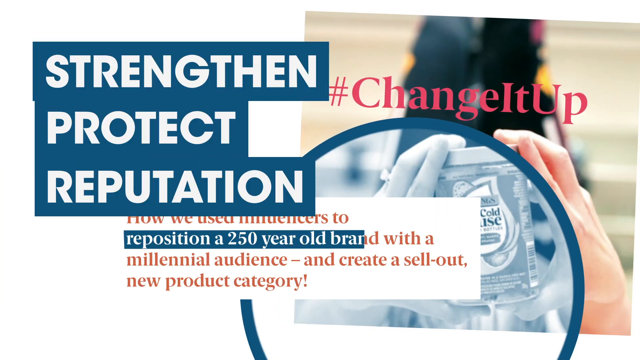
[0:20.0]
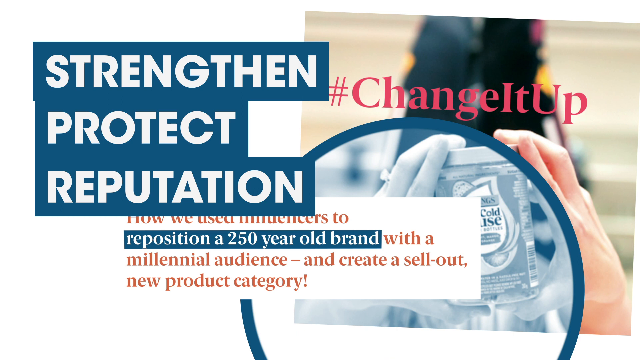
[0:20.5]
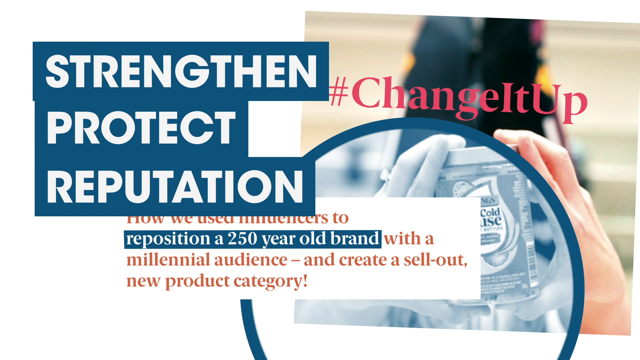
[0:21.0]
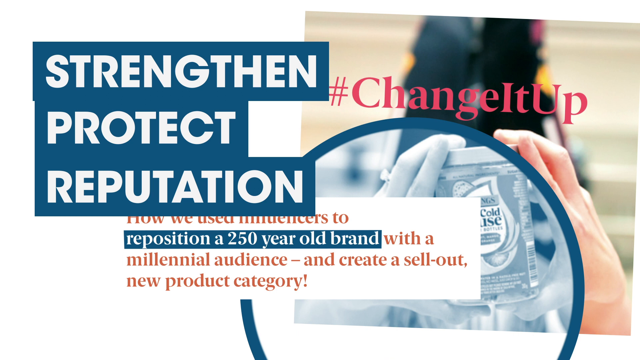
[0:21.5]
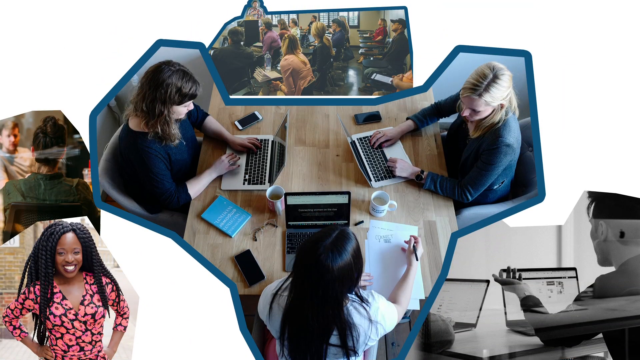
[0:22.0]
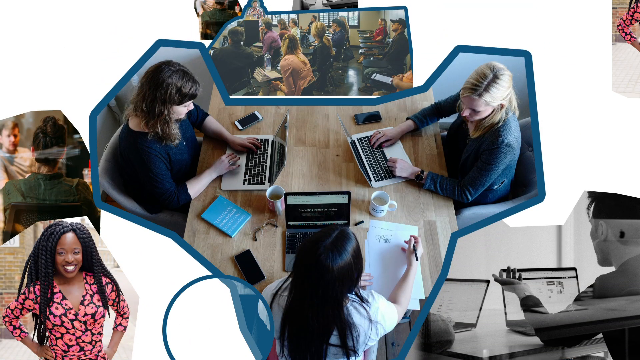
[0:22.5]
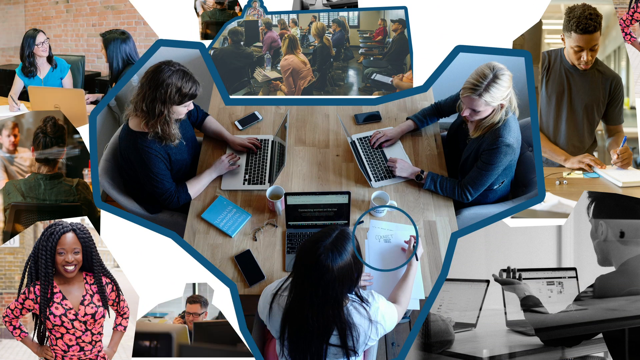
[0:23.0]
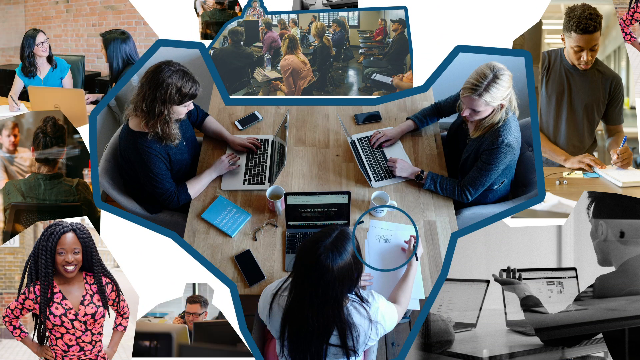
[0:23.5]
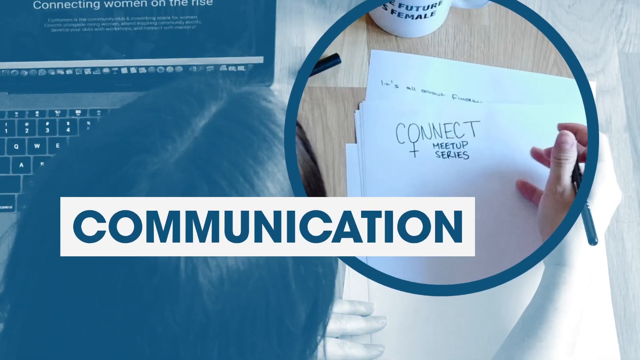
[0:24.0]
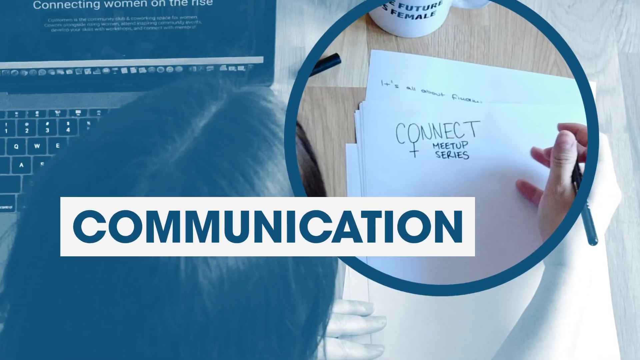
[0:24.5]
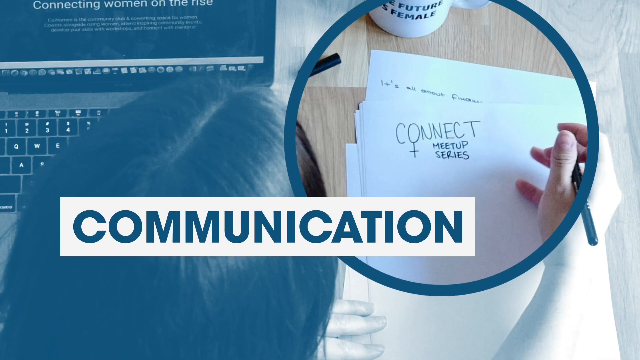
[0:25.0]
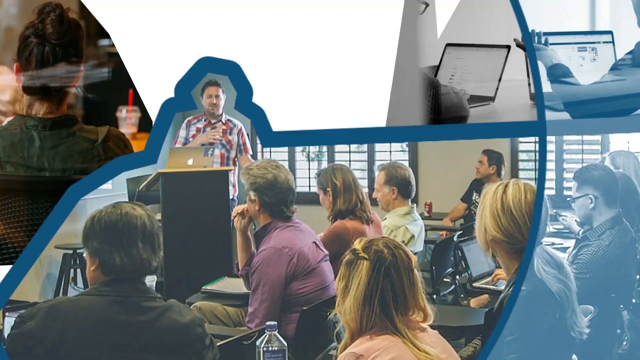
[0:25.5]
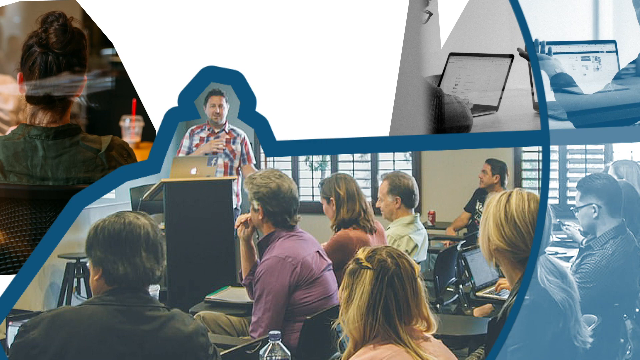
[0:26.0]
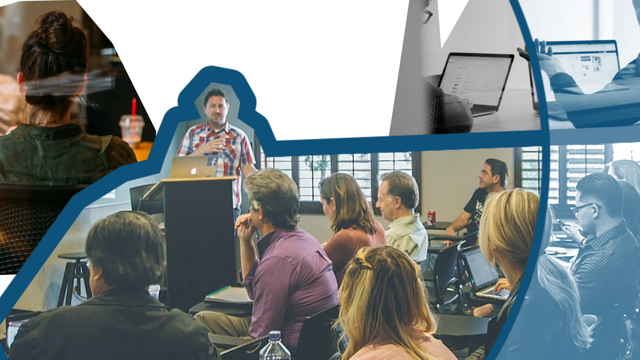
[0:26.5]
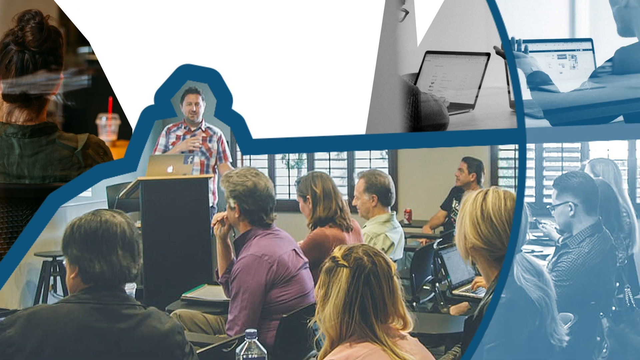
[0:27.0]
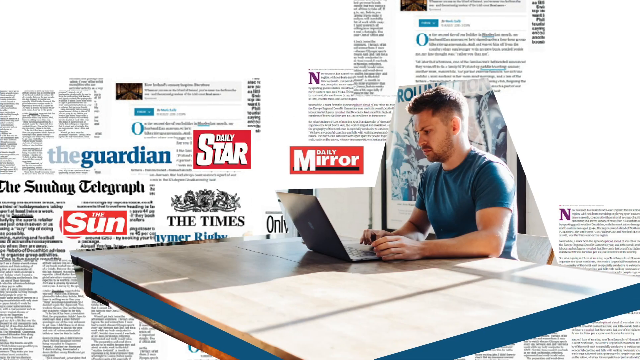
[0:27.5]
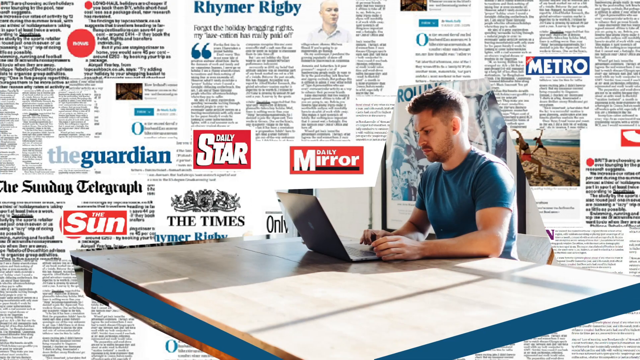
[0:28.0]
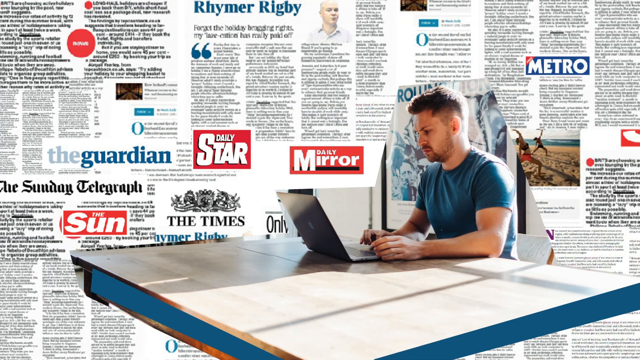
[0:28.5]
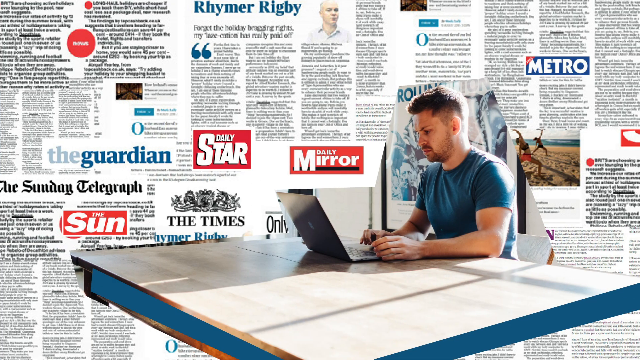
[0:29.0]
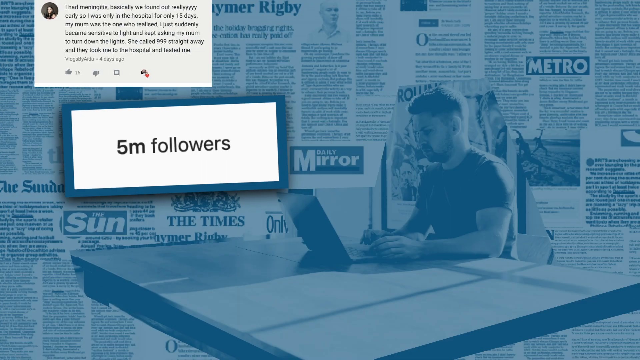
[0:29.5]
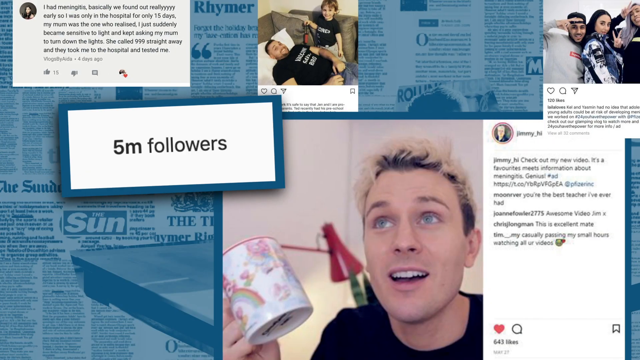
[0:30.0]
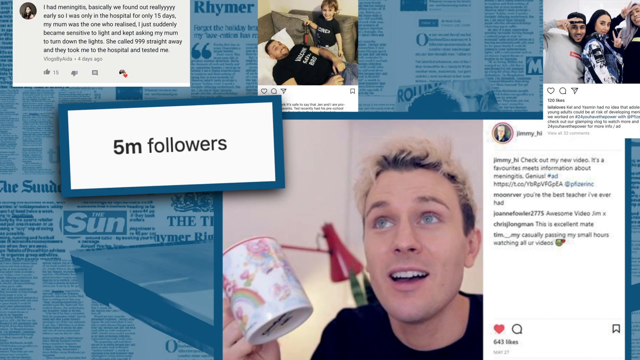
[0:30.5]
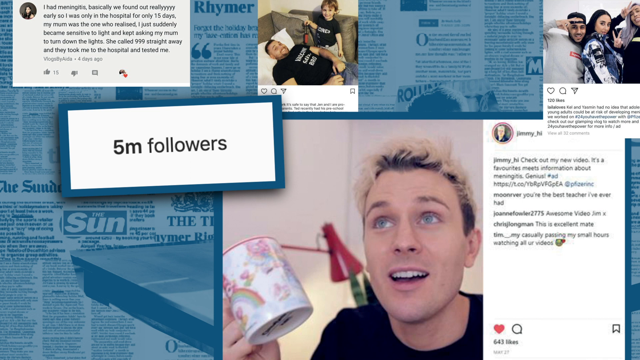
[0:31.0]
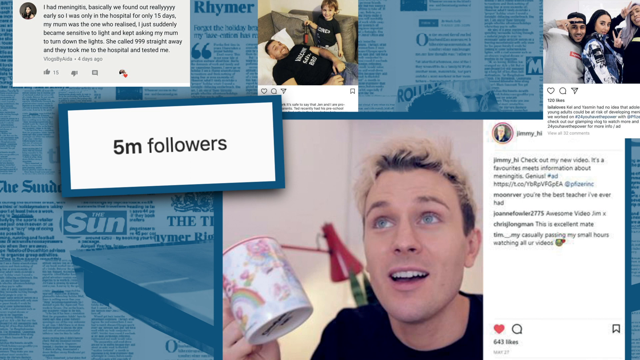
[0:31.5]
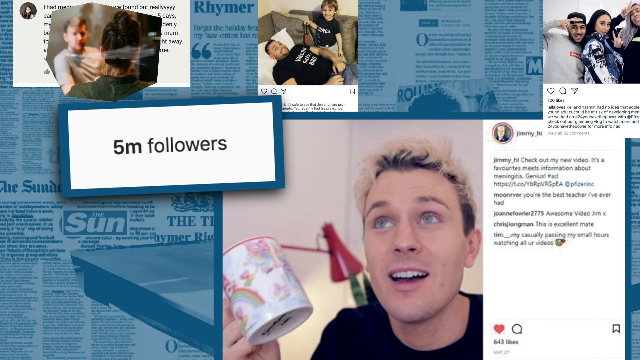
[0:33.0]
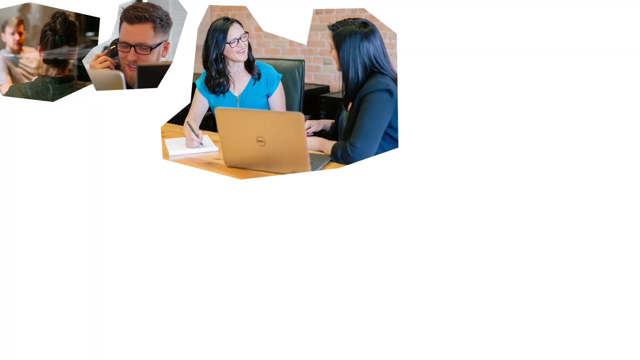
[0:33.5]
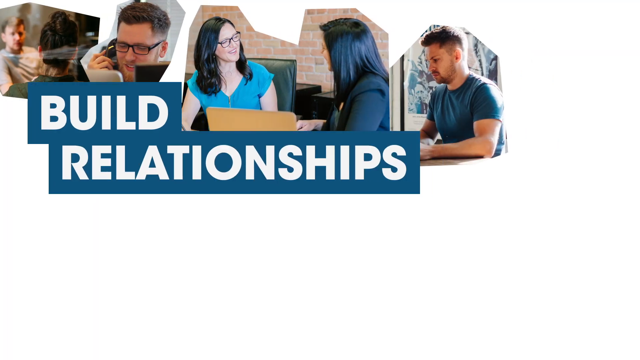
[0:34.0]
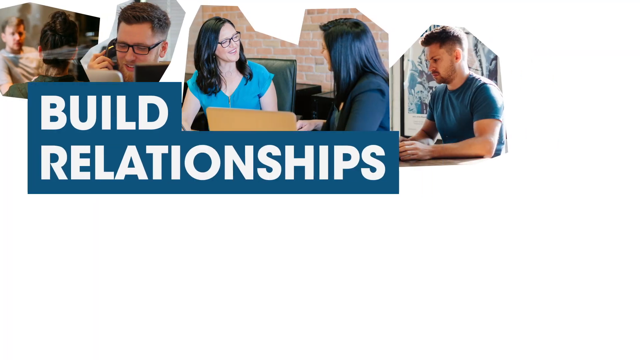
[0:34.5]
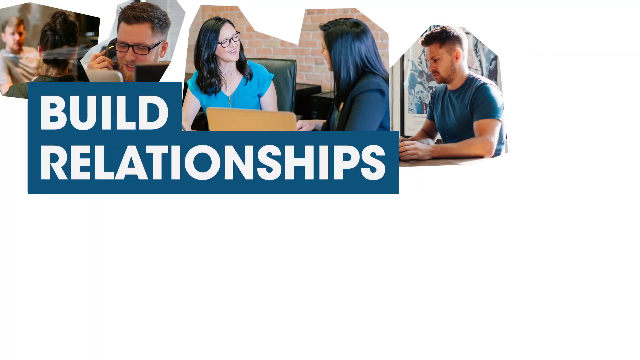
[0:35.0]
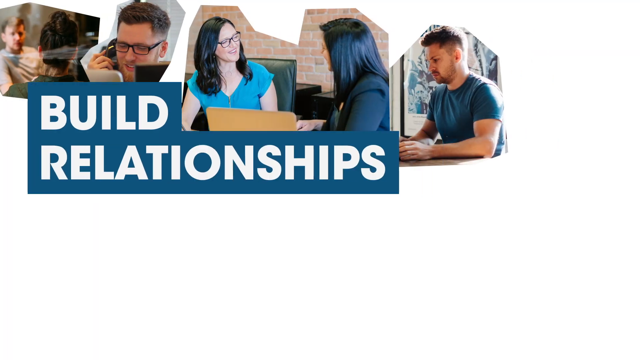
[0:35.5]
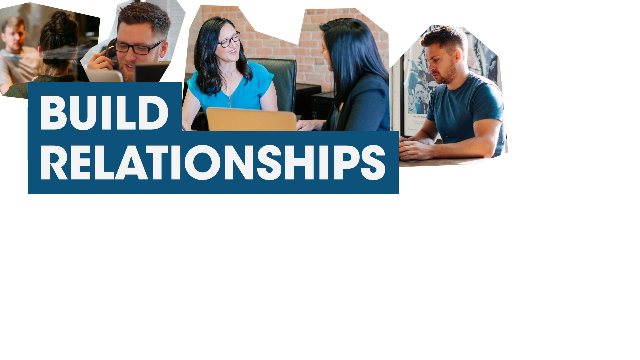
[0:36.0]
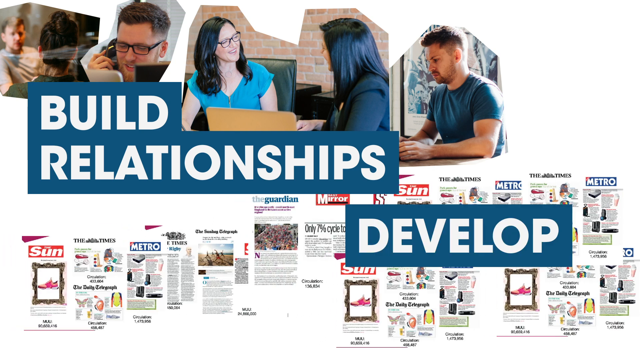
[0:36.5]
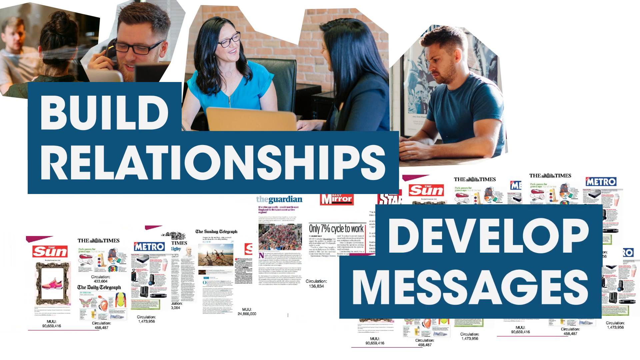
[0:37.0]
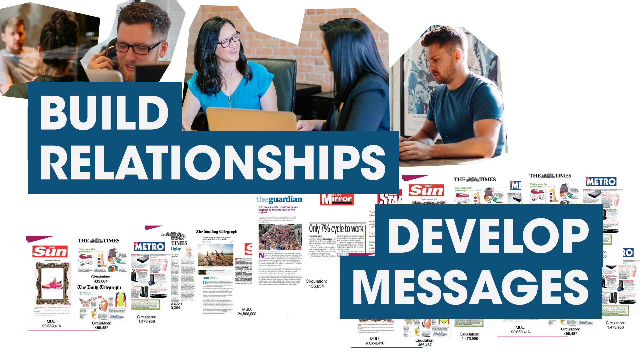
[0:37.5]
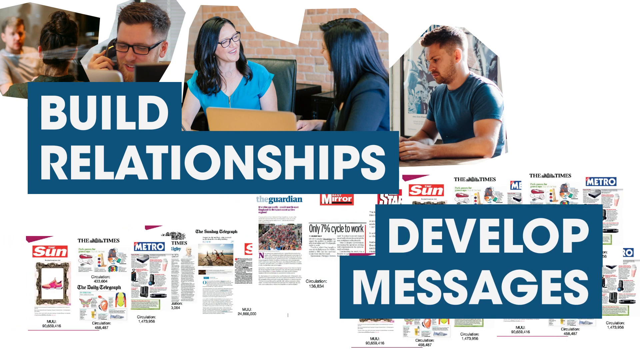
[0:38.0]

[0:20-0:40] A message on the screen says "strengthen, protect, reputation, #change it up", and another message says "how we use a Minions to reposition a 250-year-old brand with a millennium audience and create a sellout new product". A black woman appears at the bottom left of the screen. Three women sit at a table with laptops, busy working; two of them type on the laptop keyboards. Cell phones and a blue book are on the table, there are two cups of coffee, one woman has a cup of coffee, and another has a piece of paper and a pen. At the bottom right of the screen, a person who appears to be wearing a cape has a laptop in front of him. Another shot shows many people seated in what looks like a lecture room, holding iPads. A young man wearing glasses and a blue top is also at a table with laptops, and there is a brown laptop.